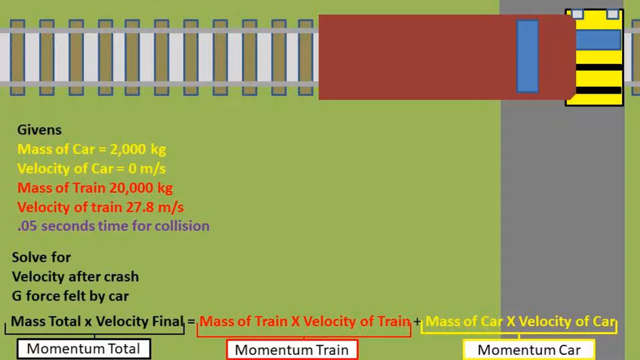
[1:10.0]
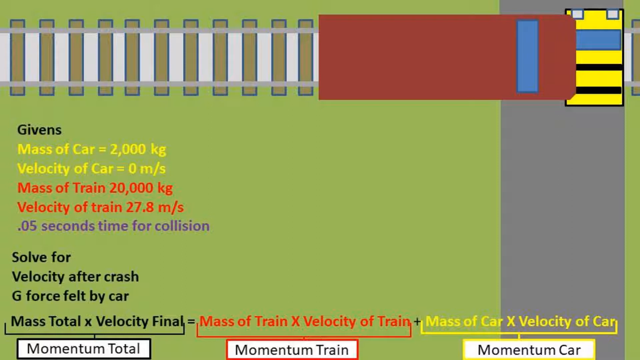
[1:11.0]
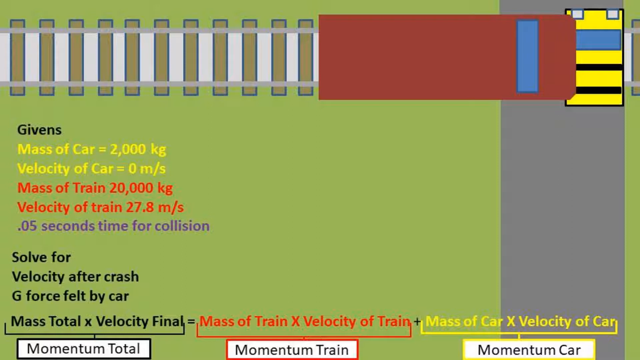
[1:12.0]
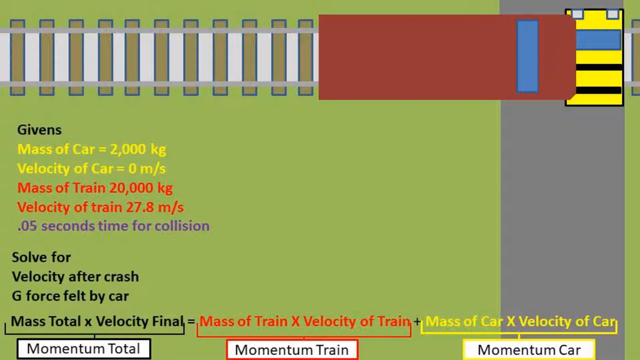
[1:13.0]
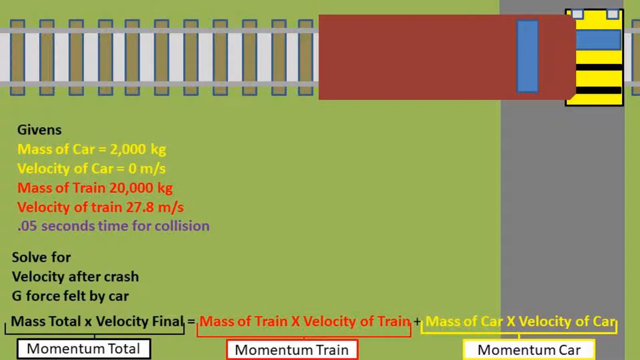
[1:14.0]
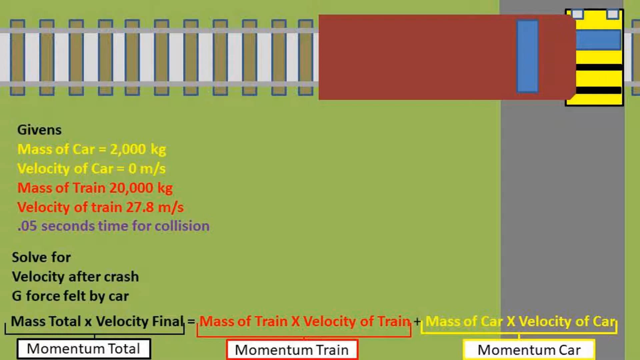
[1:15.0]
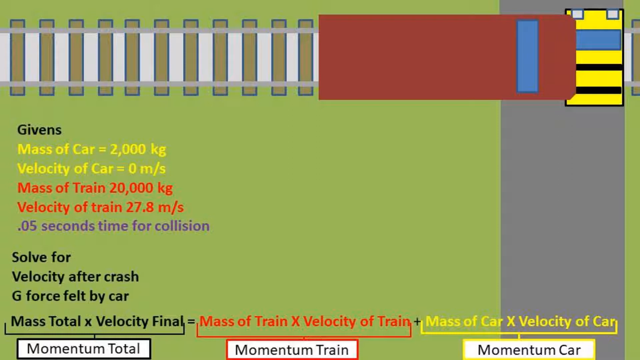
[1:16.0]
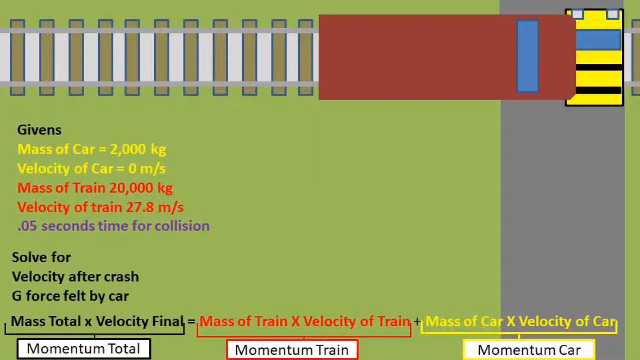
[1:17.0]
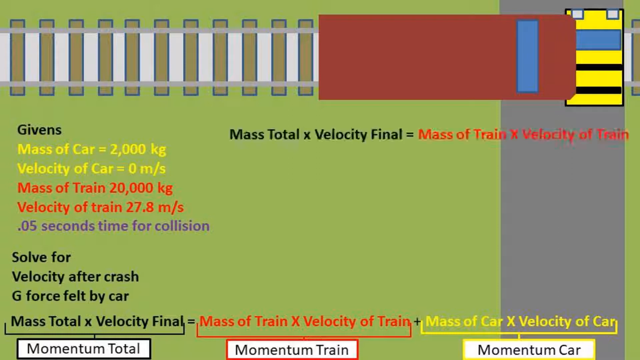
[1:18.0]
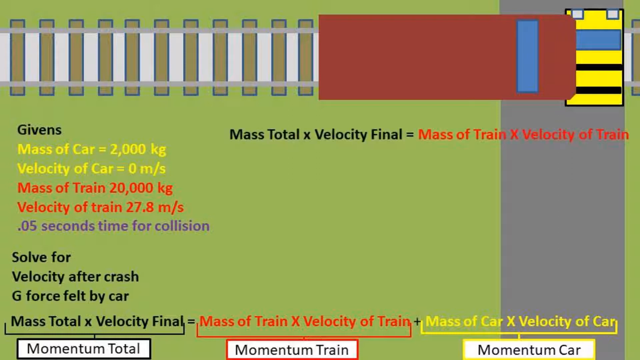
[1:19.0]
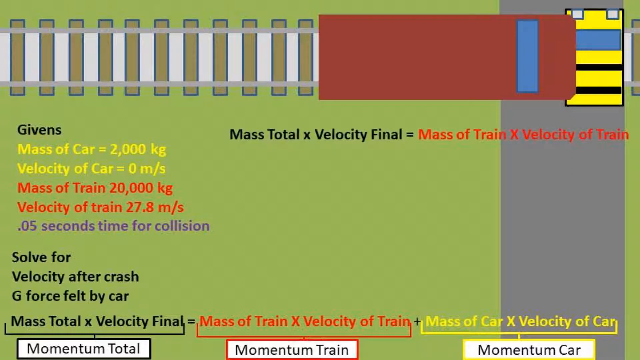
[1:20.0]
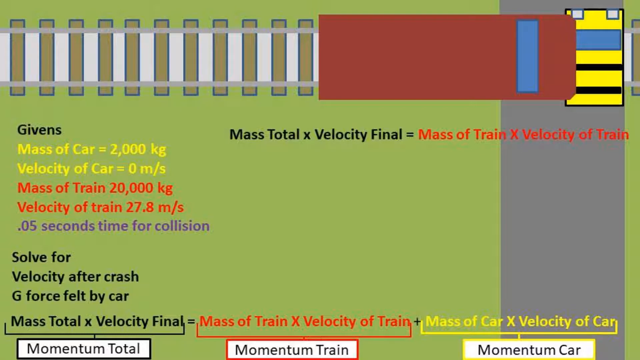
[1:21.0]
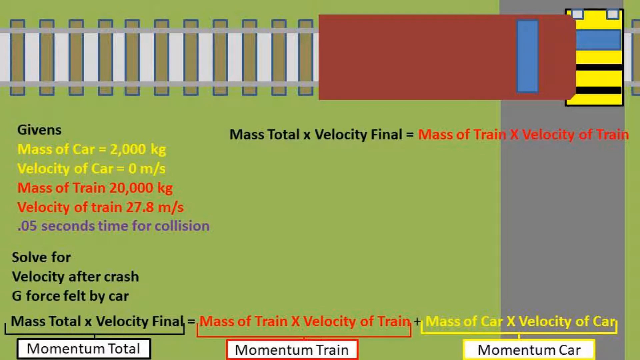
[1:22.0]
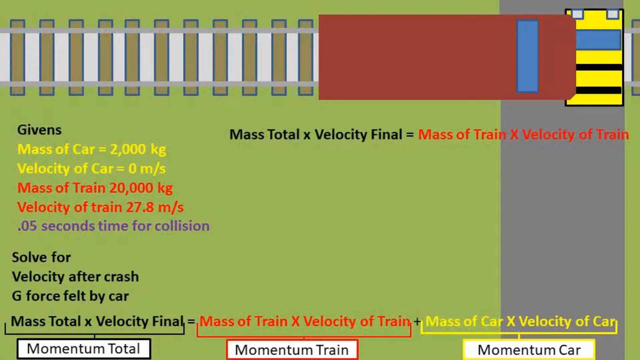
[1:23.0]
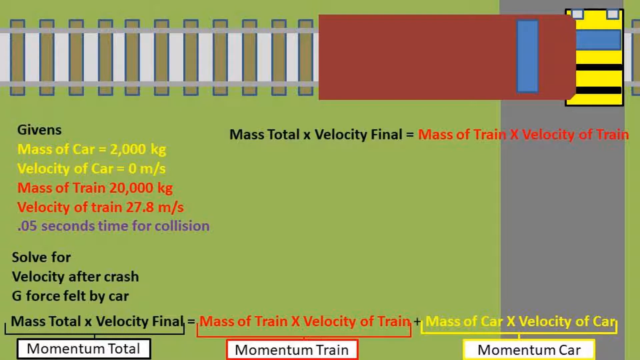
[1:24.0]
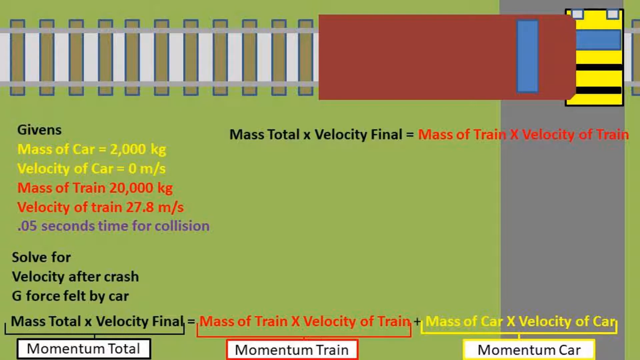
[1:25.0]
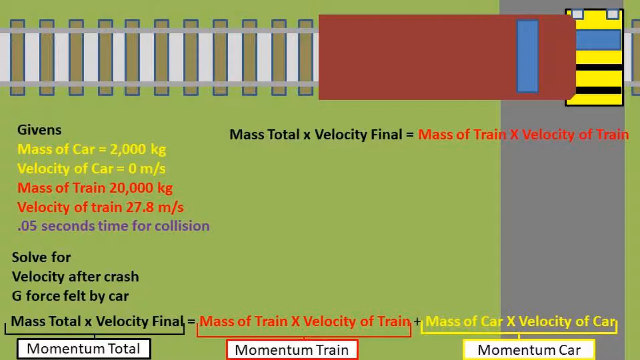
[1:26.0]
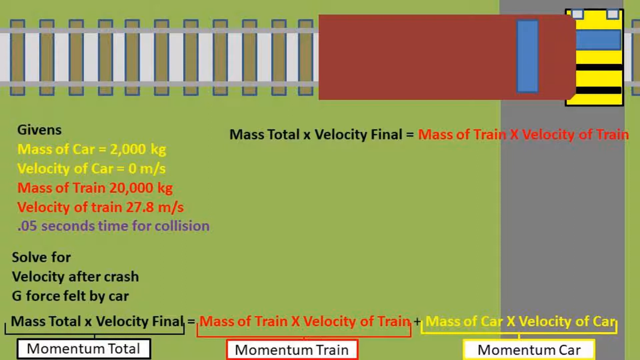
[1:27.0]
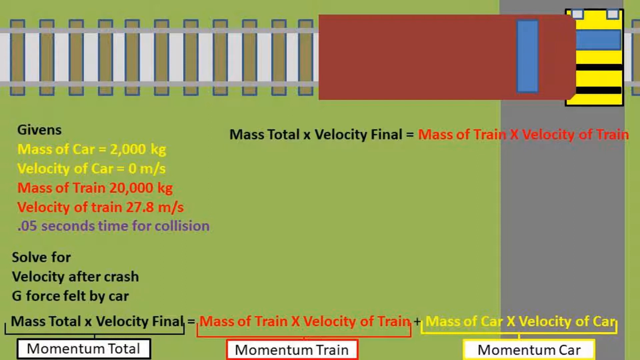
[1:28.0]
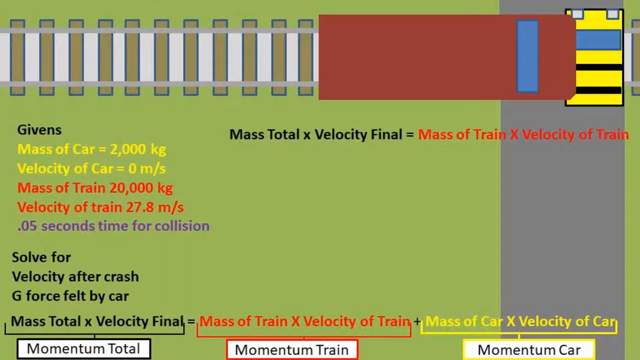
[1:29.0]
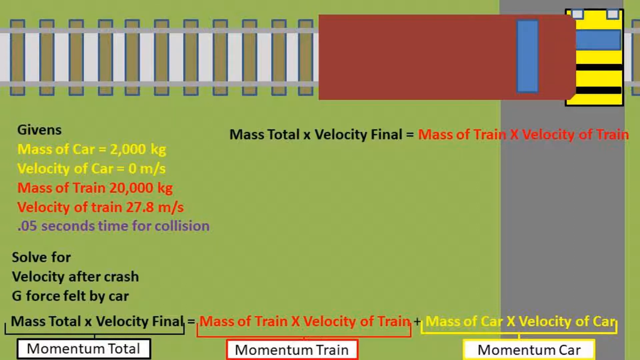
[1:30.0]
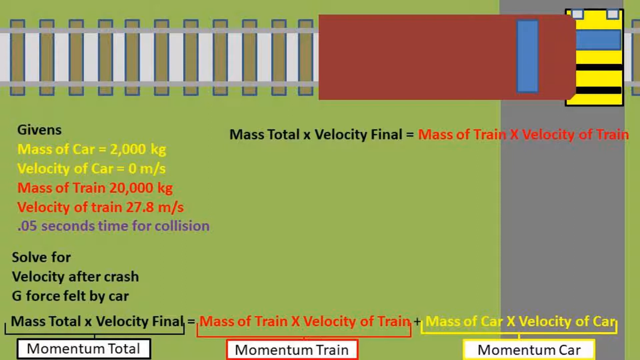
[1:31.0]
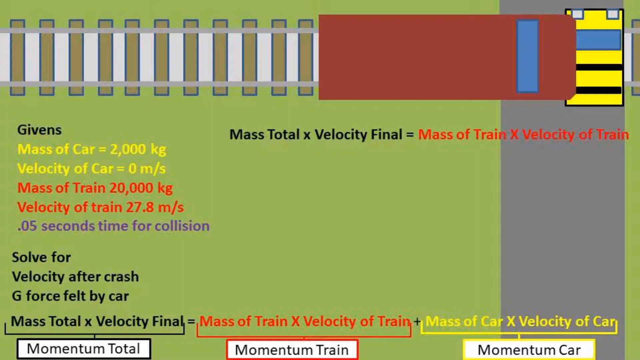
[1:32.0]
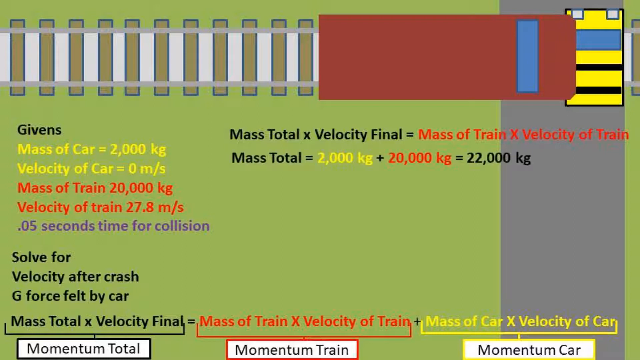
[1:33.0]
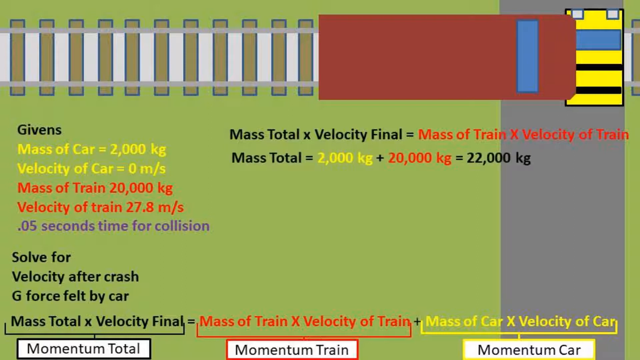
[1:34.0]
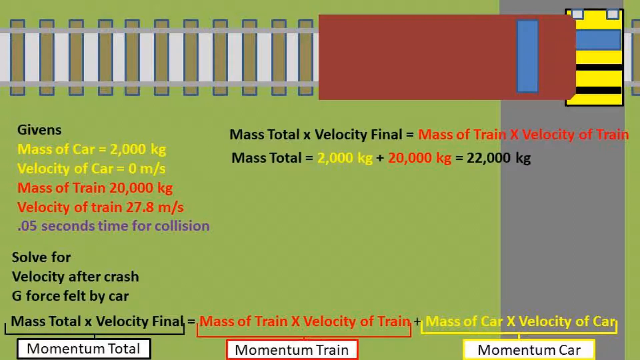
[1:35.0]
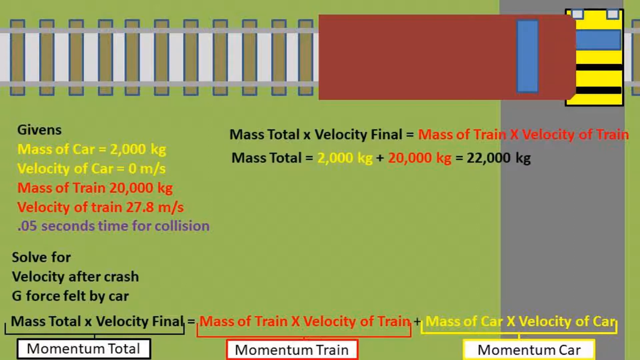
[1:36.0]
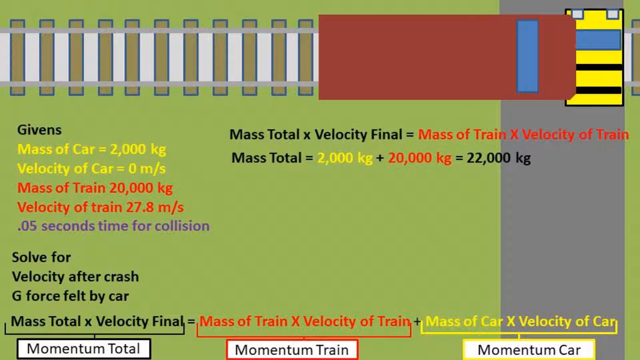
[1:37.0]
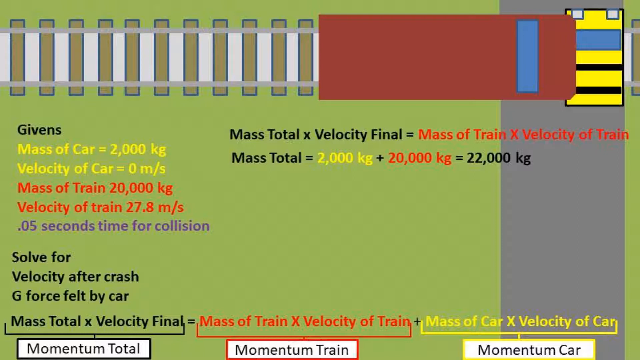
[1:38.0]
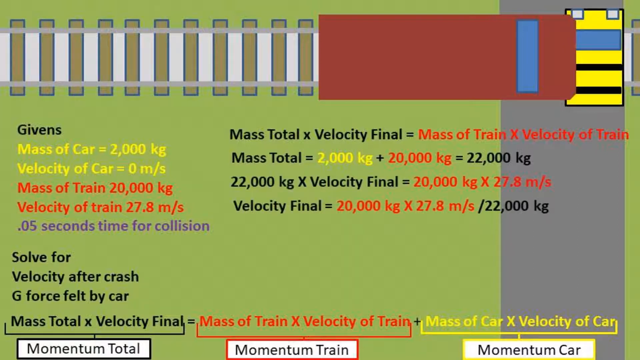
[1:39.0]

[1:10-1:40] A simple diagram shows a train that has hit a car stopped on the train tracks. Givens include the mass of the car and train and the velocity of the car and train, and the problem asks for the velocity after the crash and the g-force felt by the car. A formula states that total momentum equals the momentum of the train plus the momentum of the car. On-screen text works through the equation step by step, first calculating the total mass by adding the mass of the car and the mass of the train, then showing how to find the final velocity by multiplying the mass of the train by the velocity of the train and dividing by the total mass.